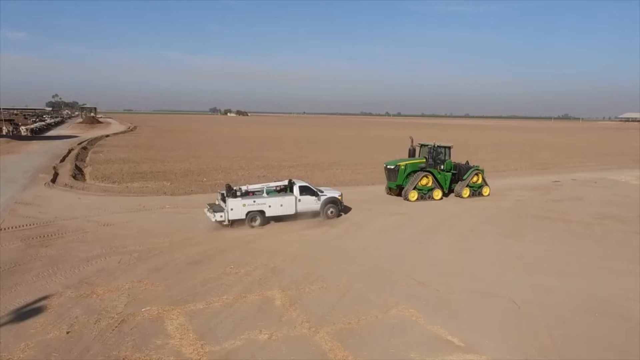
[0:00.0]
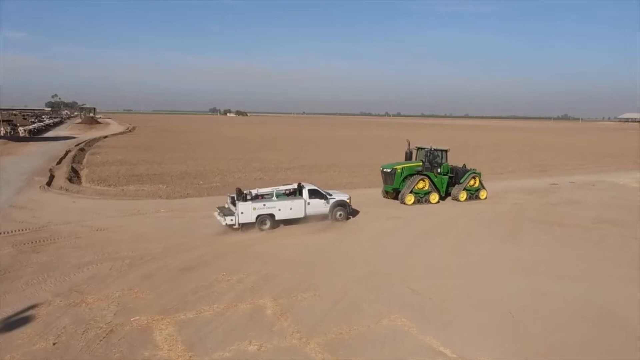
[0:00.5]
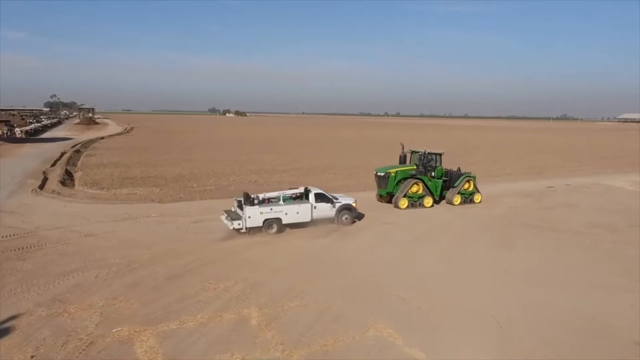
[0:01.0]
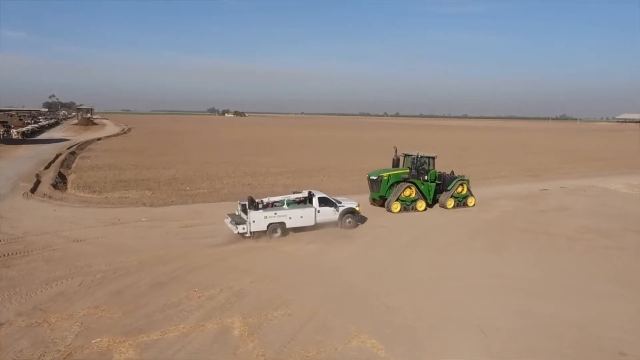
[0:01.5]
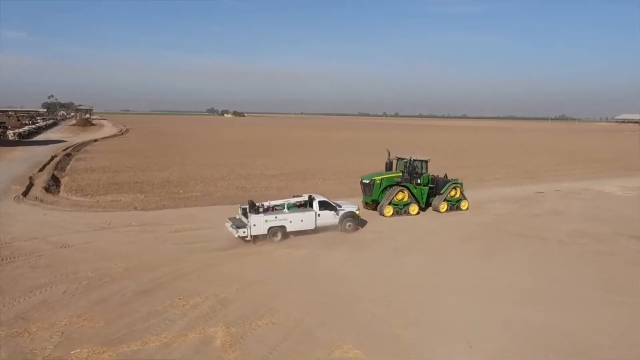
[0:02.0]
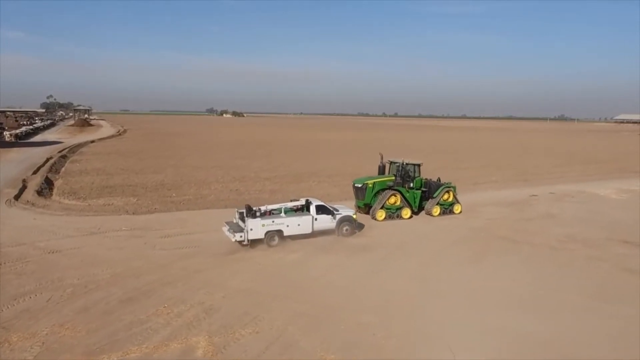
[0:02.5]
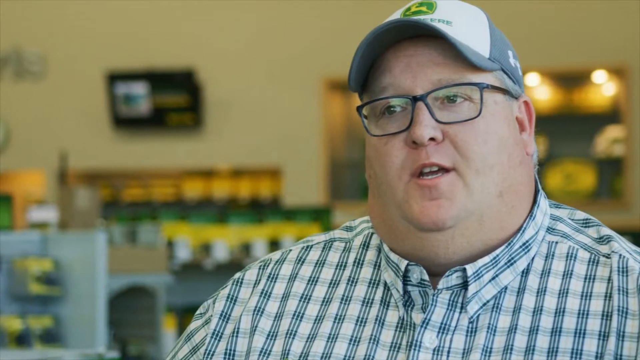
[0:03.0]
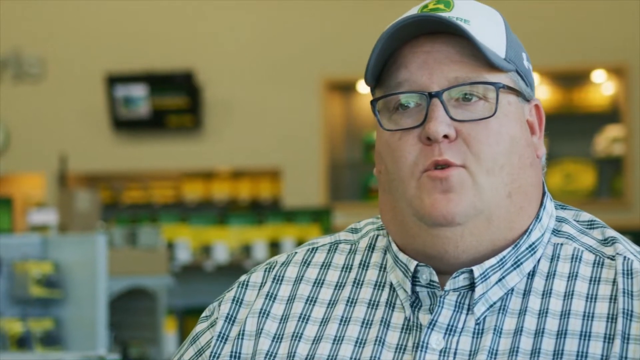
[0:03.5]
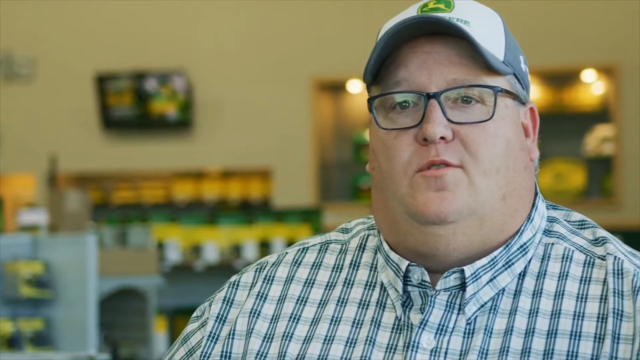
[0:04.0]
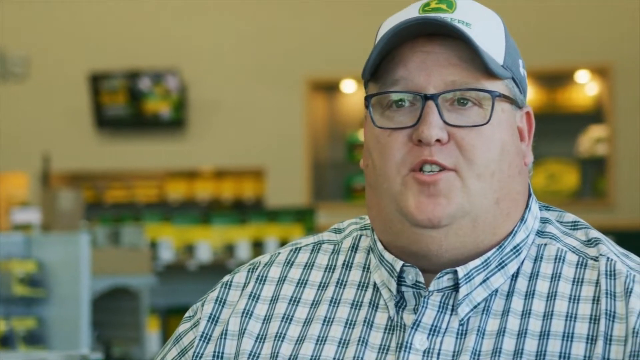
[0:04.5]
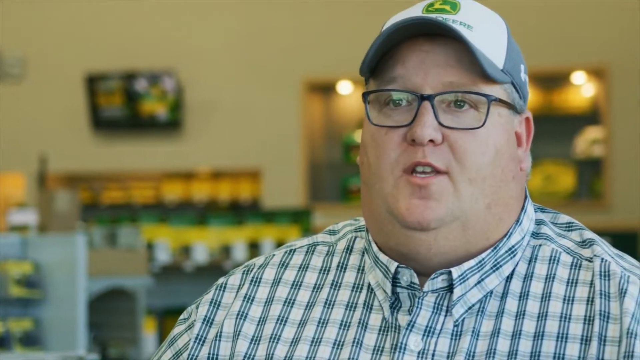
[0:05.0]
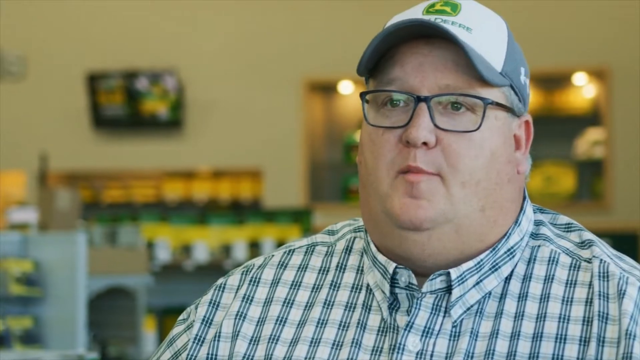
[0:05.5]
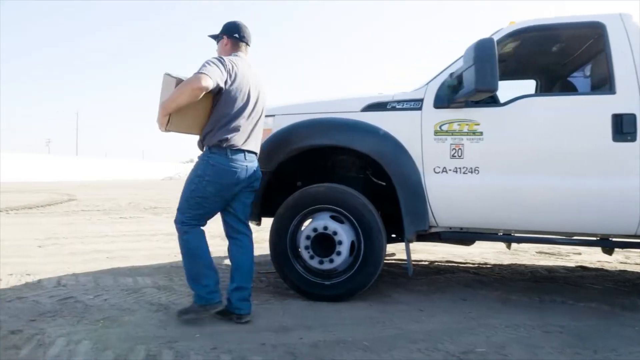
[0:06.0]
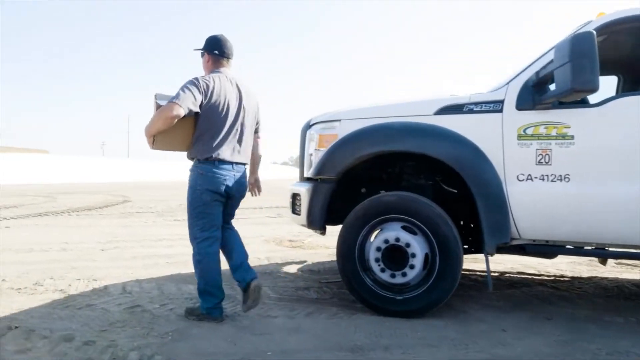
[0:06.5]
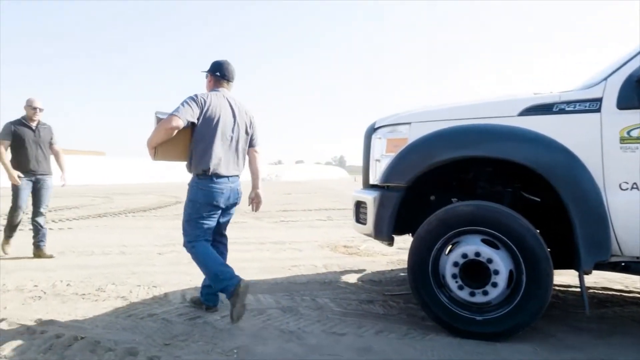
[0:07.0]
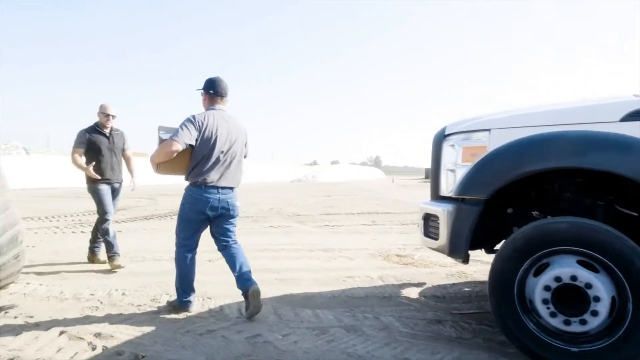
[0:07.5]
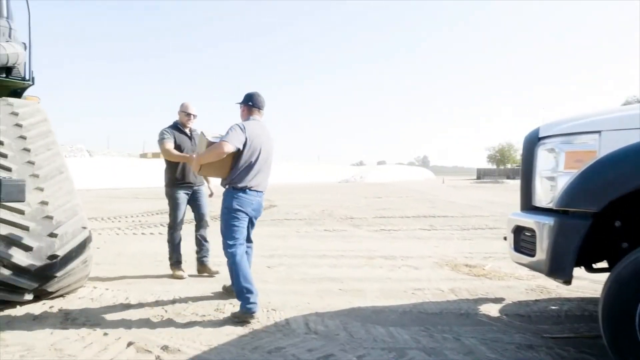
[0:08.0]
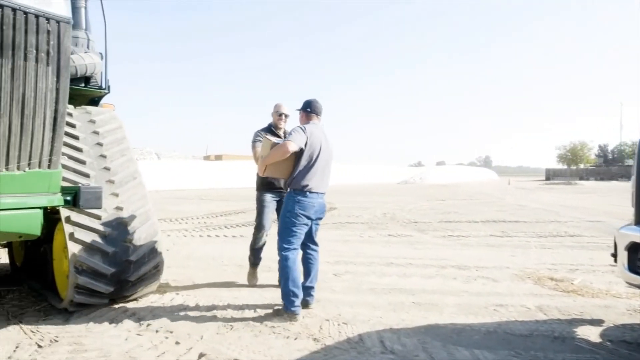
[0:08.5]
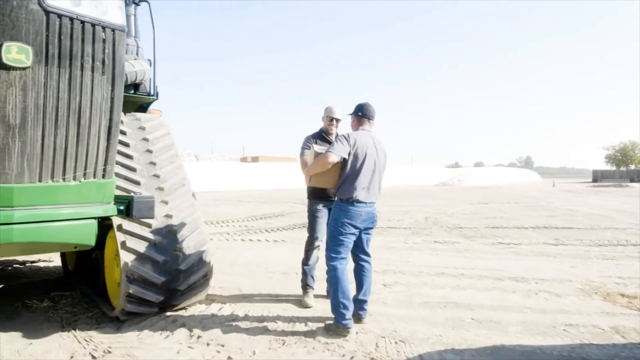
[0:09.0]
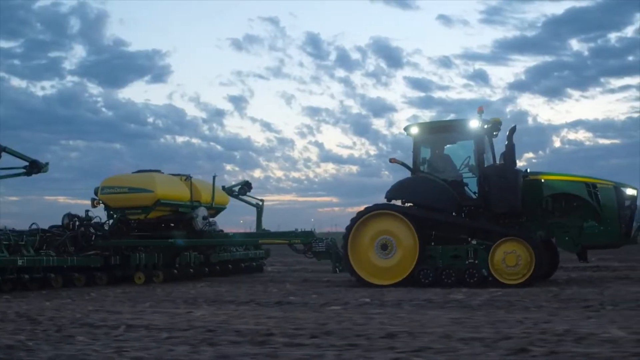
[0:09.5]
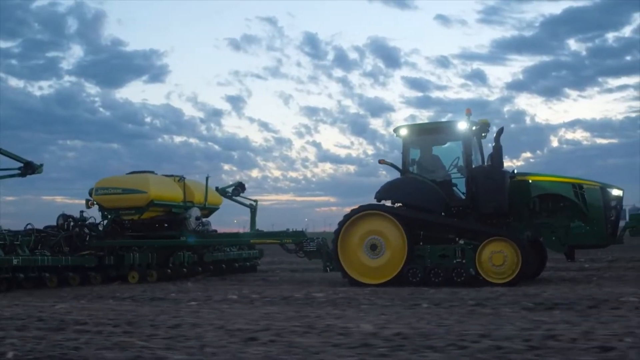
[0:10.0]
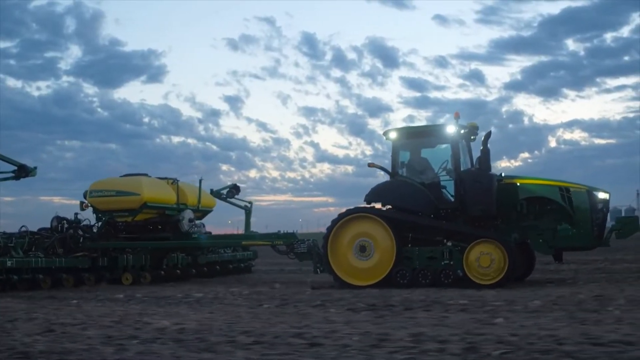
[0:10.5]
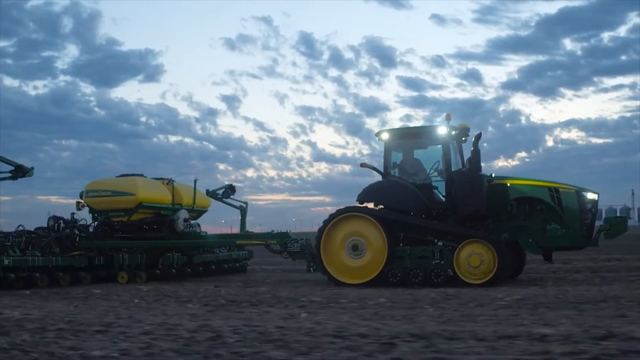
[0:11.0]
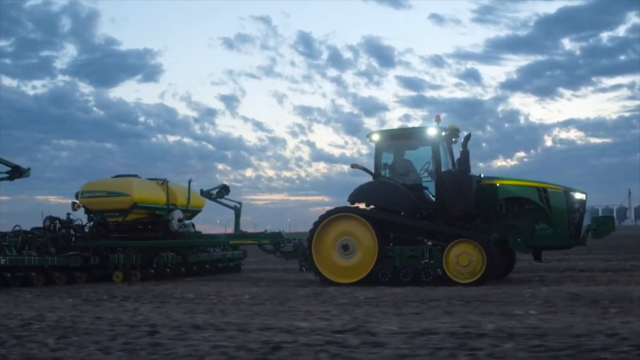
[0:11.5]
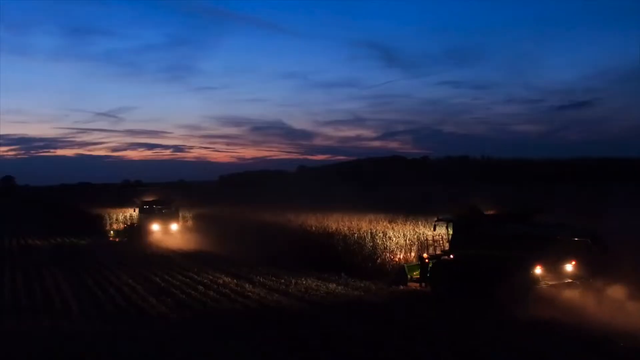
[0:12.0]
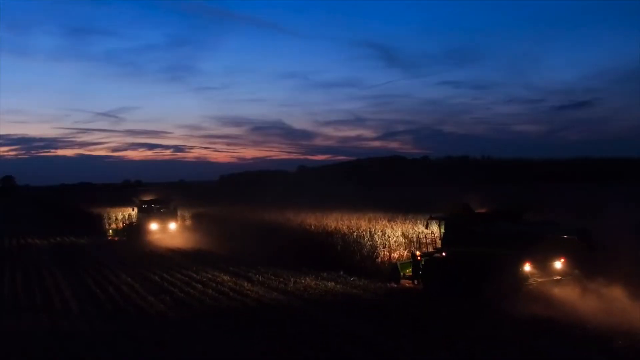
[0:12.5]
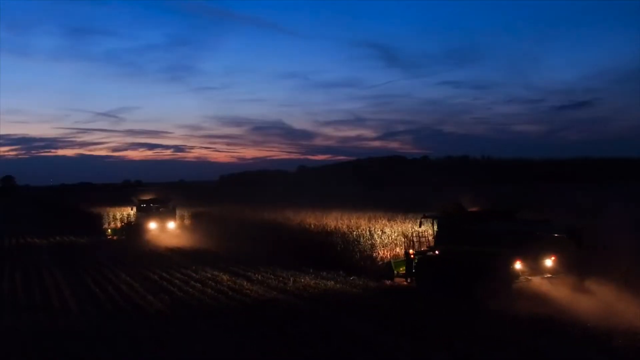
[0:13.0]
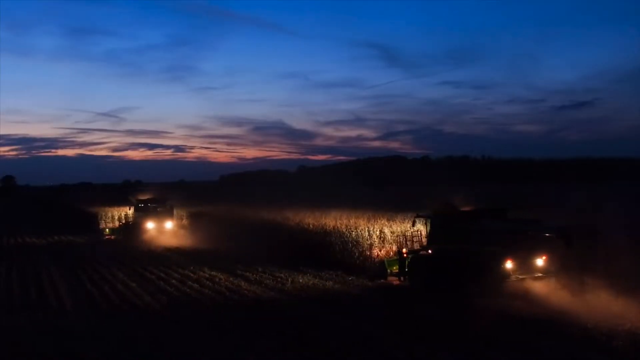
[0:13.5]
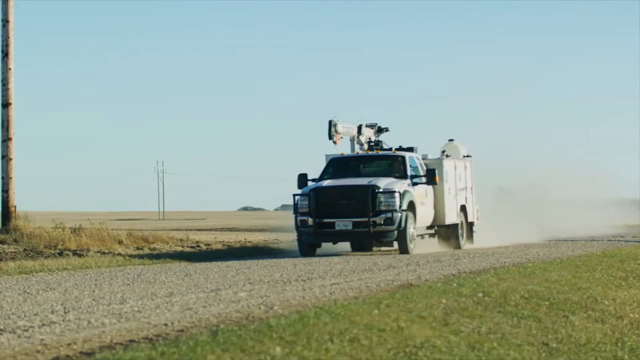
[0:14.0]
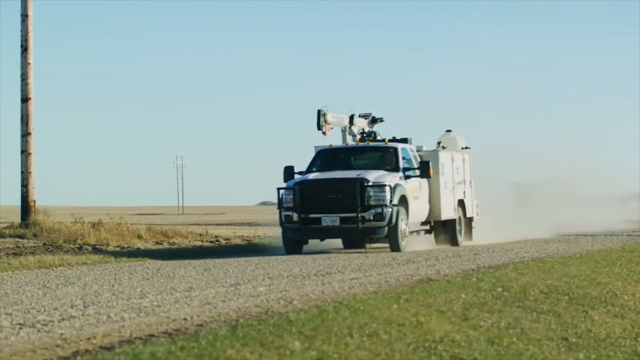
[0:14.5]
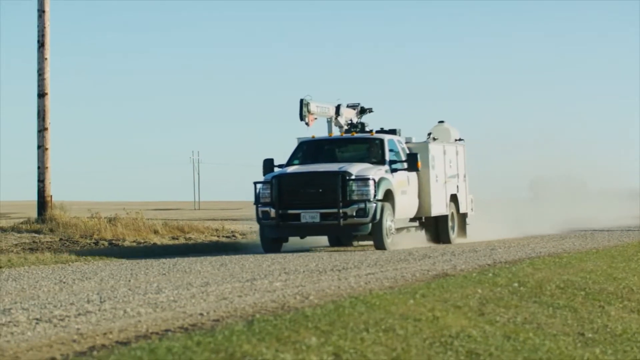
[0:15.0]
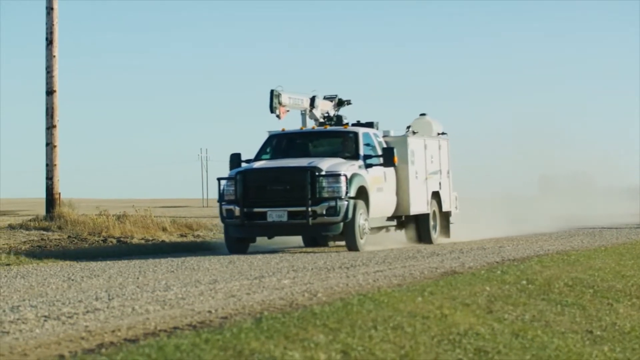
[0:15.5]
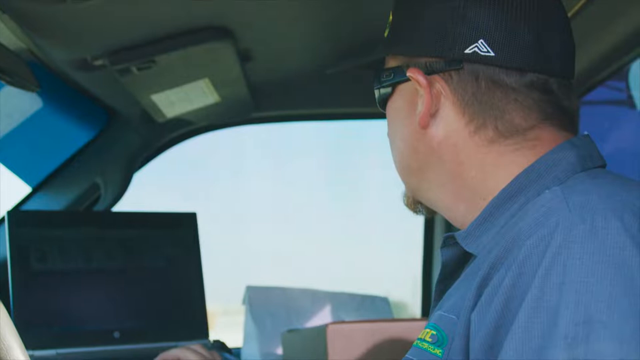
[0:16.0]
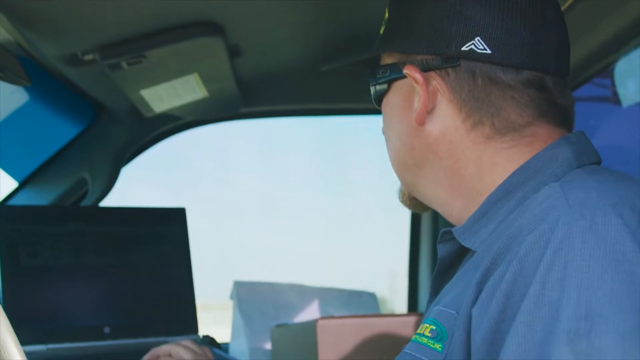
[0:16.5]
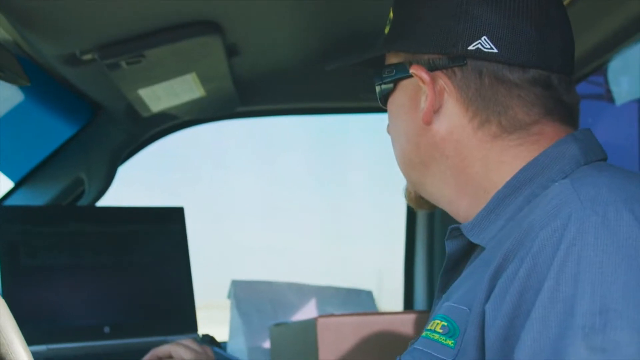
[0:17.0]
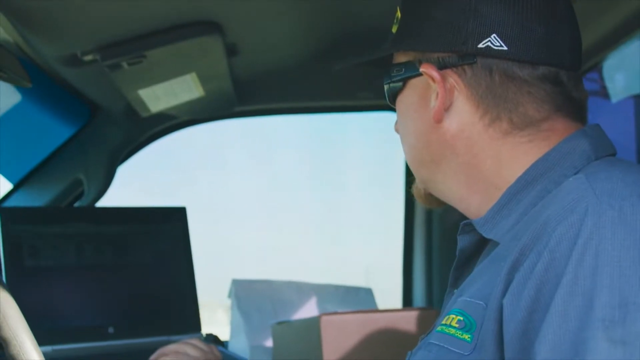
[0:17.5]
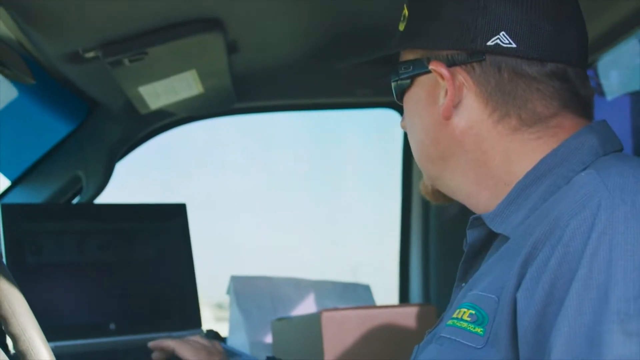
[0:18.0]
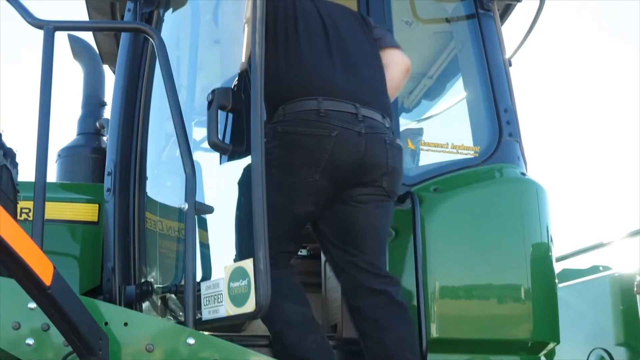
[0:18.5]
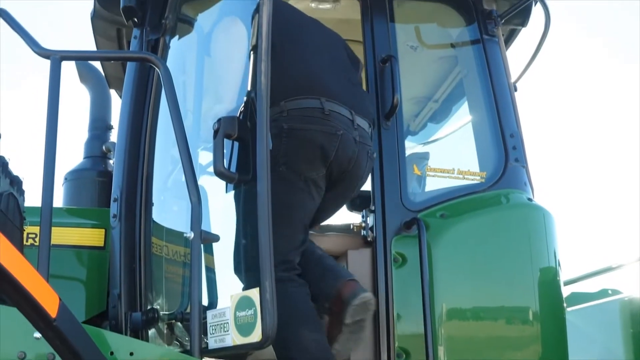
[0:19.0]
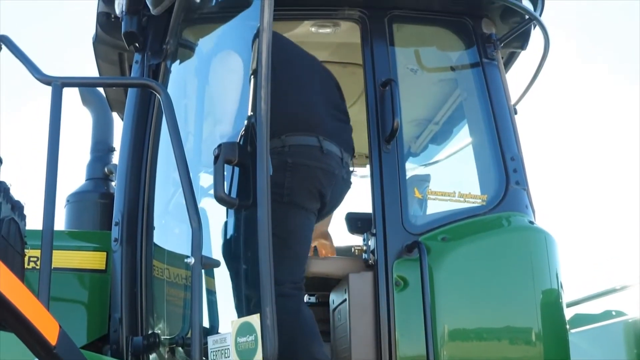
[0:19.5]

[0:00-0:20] A white truck on the left and a green and yellow tractor on the right move toward each other across a wide, empty, dusty expanse. On the left side there is a bit of a road, but it seems to sort of wash out in the middle where the vehicles are traveling. As they get closer, the video cuts to a man shown from about the chest up, wearing a grey and white John Deere hat and a shirt with green stripes that is white underneath; the background behind him is mostly blurred. Next, a man gets out of the white truck, which is visible from the front driver's seat to the front of the vehicle. Wearing a tan shirt and jeans and holding a box in one hand, he walks away from the viewer toward another man coming out of the tractor on the left, who wears a black shirt and black jeans. The two shake hands. The scene changes to a similar, if not the same, tractor, this time with an extra attachment on the back; it is kind of at dusk, so it is a little dark, and the tractor and trailer move toward the right. Another scene at night shows just the headlights of a couple of vehicles illuminating some kind of field of crops around them. The white truck appears again, this time traveling toward the viewer on a gravel road. Inside the cab, a man in a blue shirt and black hat looks out of the passenger side window. Then the man in black steps into the tractor in close-up.